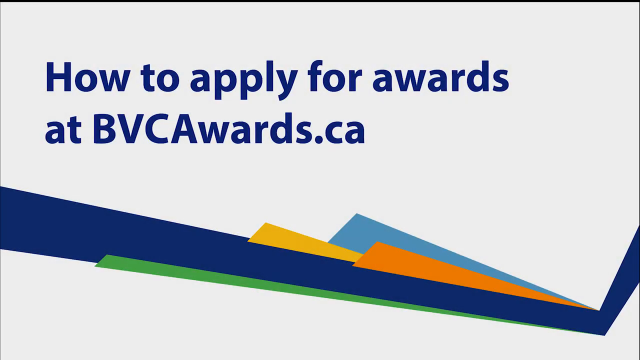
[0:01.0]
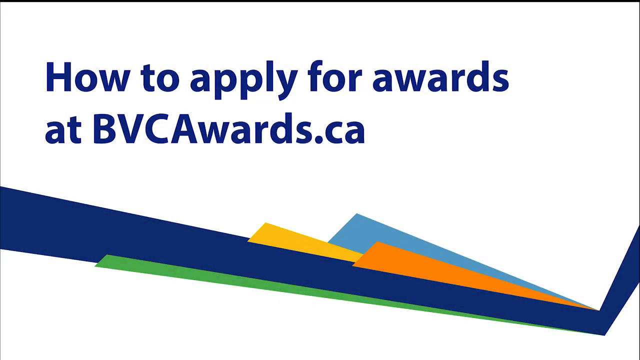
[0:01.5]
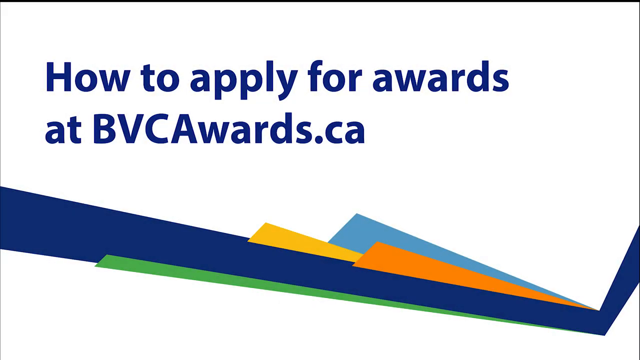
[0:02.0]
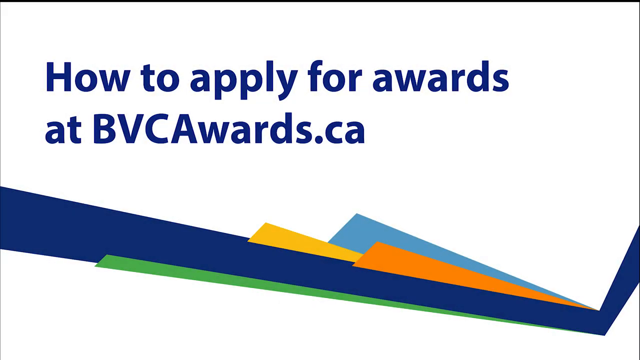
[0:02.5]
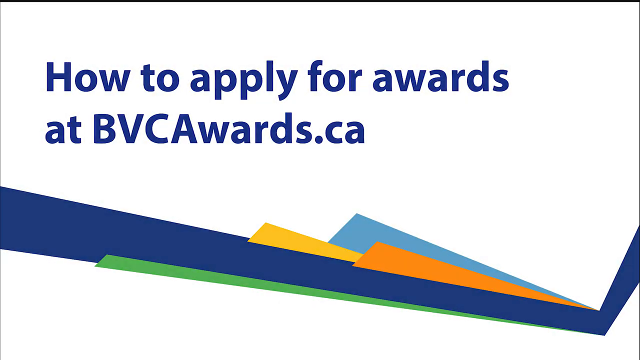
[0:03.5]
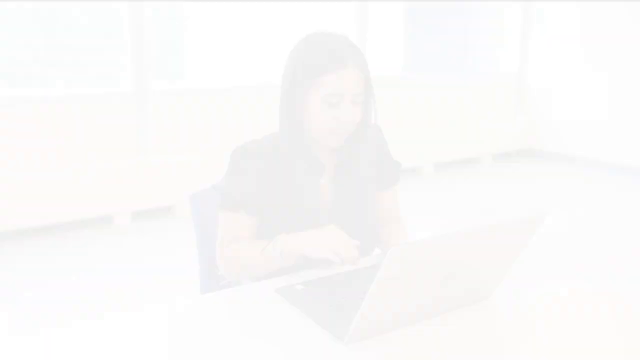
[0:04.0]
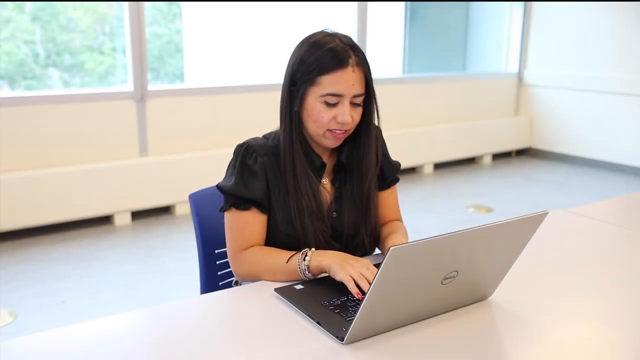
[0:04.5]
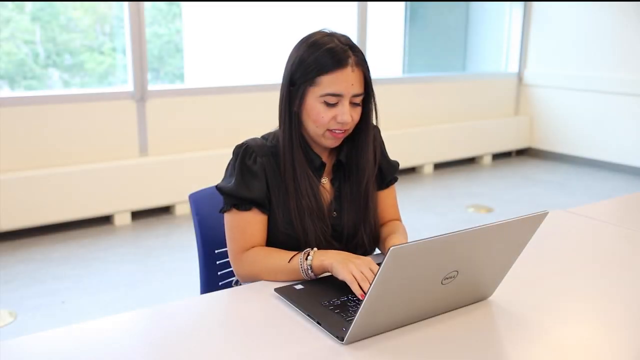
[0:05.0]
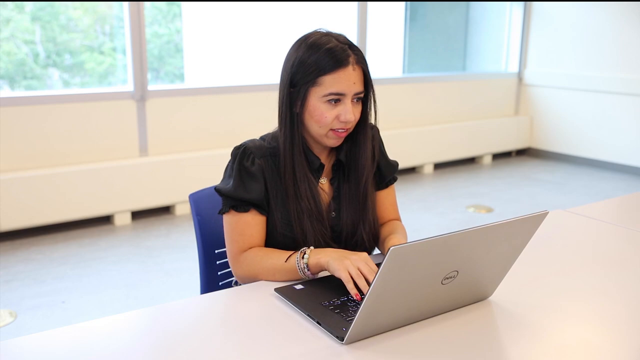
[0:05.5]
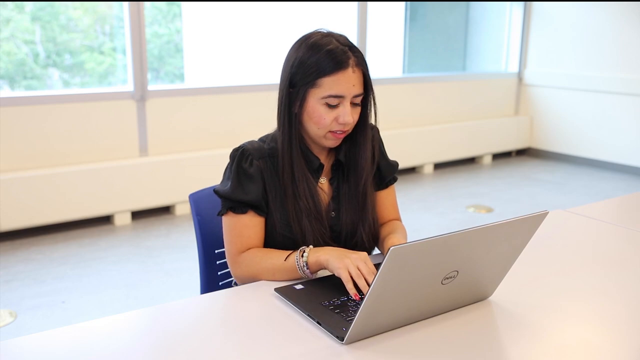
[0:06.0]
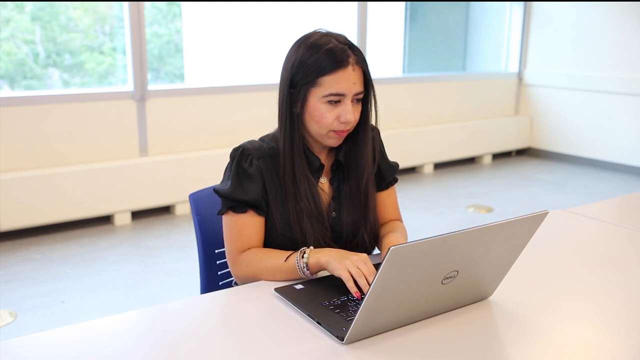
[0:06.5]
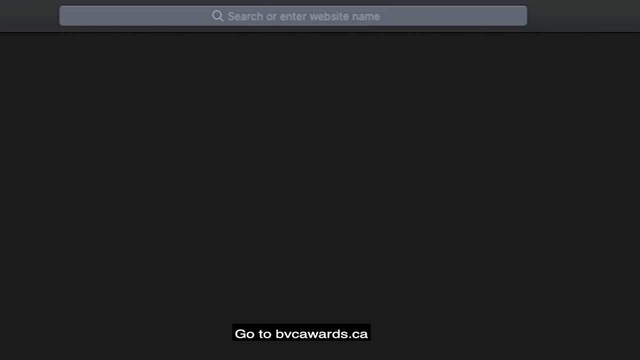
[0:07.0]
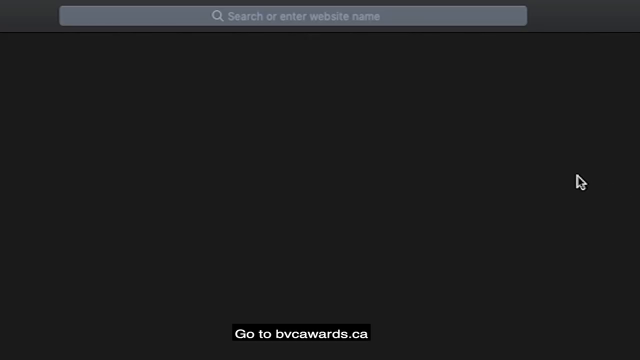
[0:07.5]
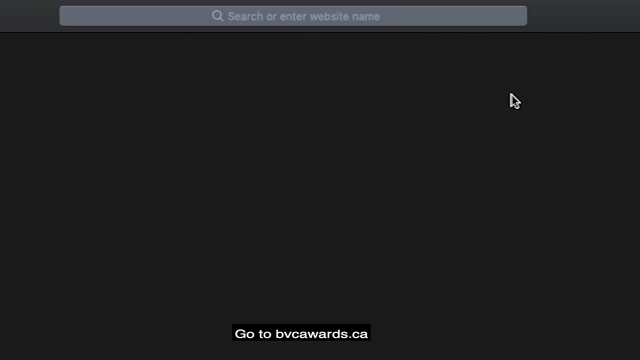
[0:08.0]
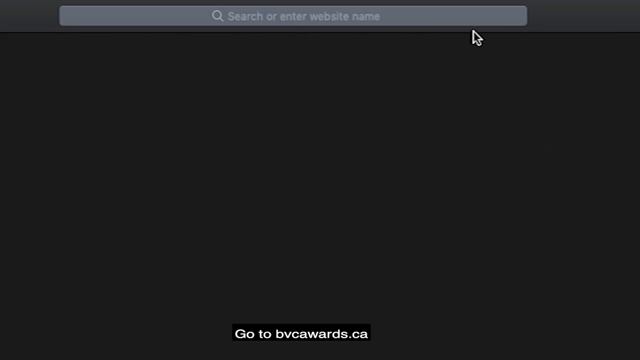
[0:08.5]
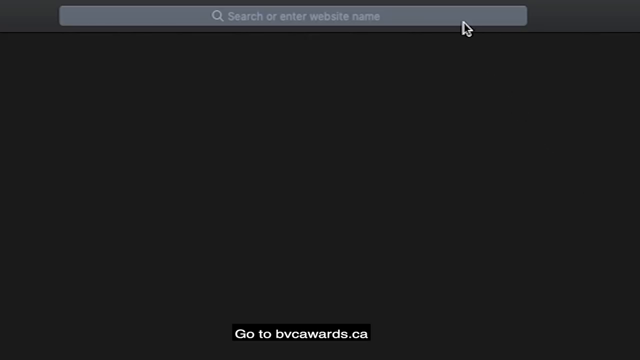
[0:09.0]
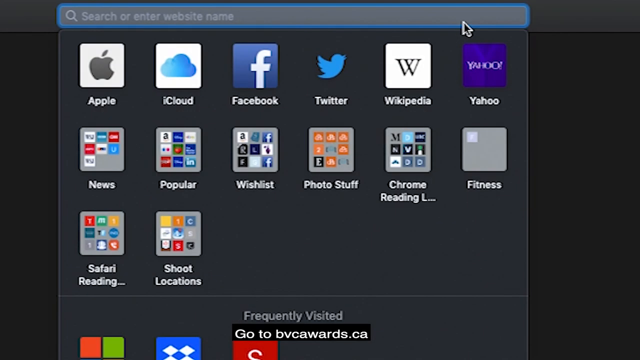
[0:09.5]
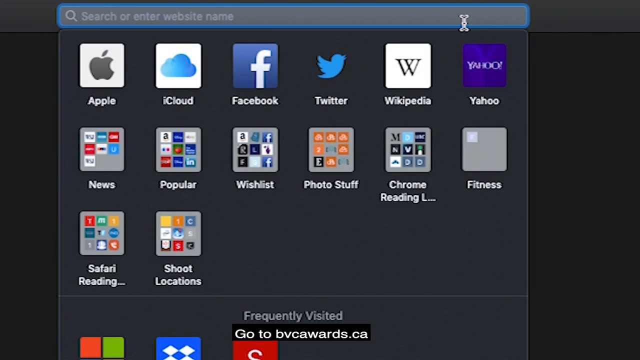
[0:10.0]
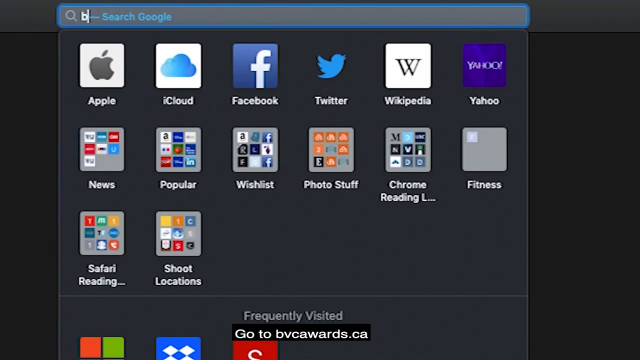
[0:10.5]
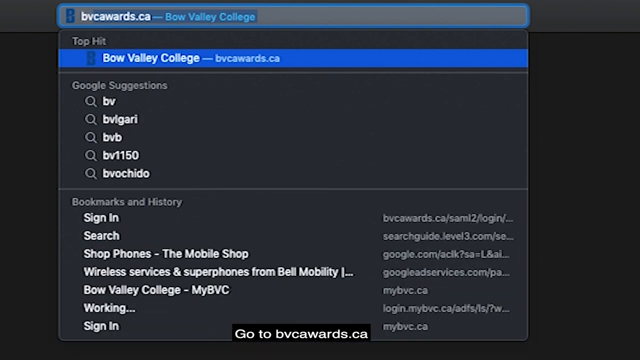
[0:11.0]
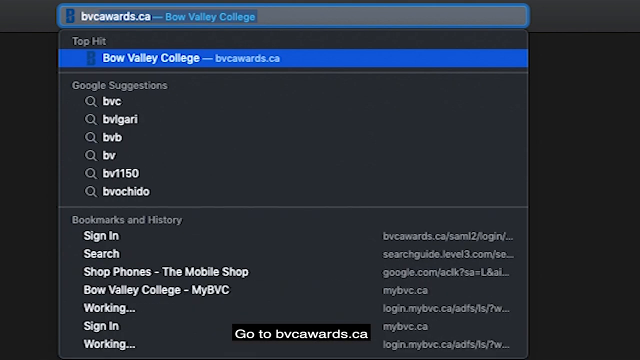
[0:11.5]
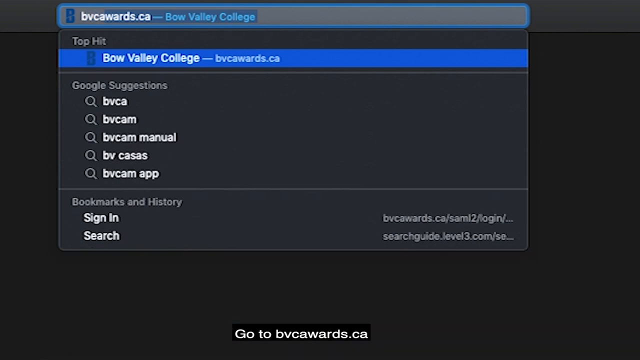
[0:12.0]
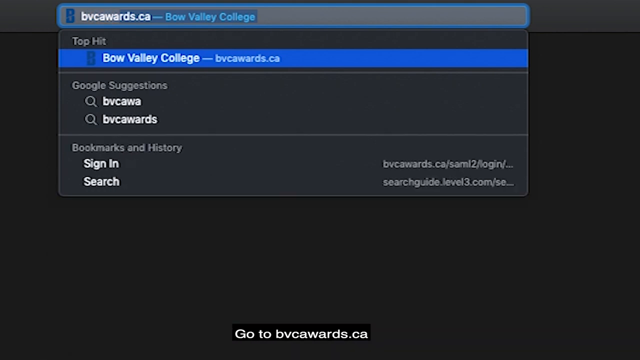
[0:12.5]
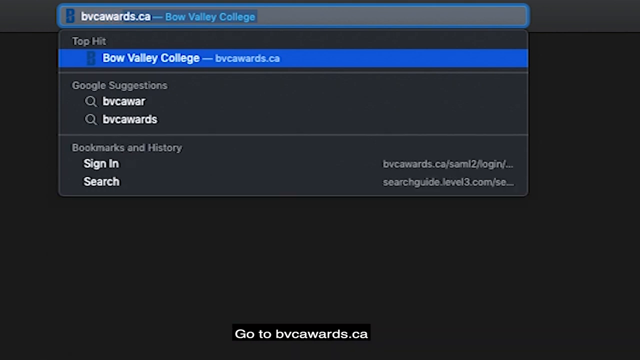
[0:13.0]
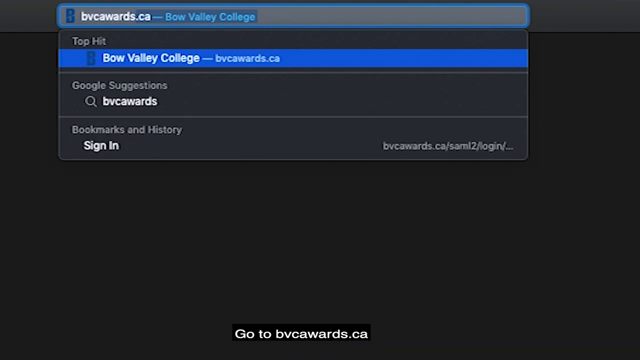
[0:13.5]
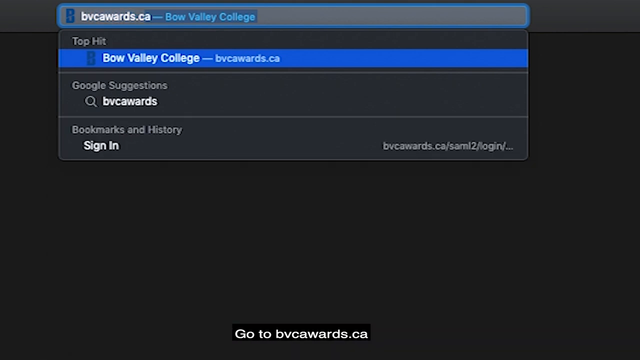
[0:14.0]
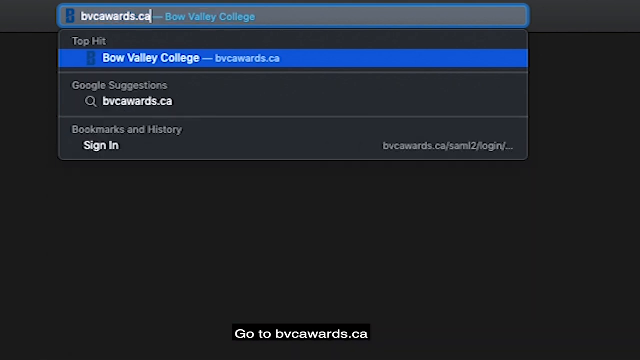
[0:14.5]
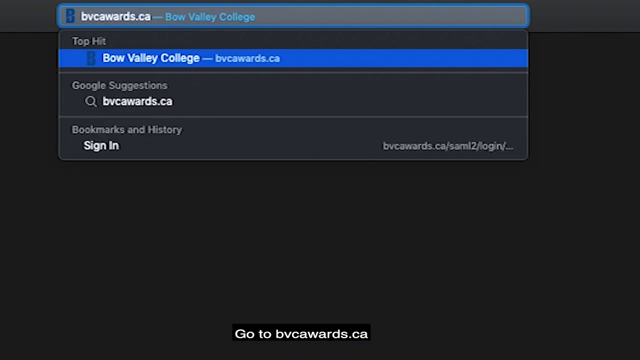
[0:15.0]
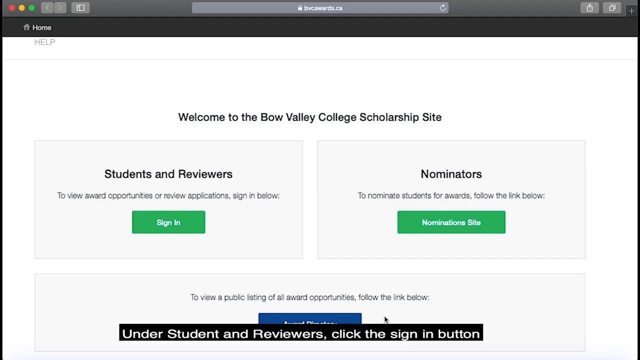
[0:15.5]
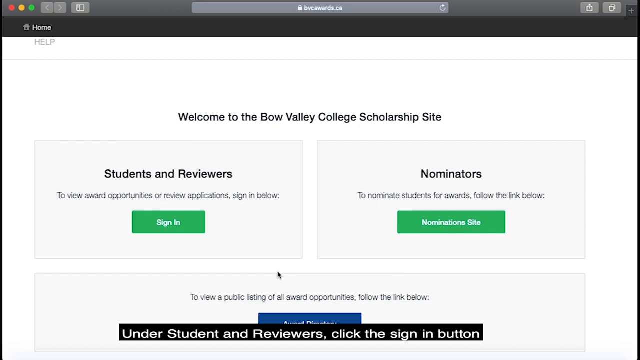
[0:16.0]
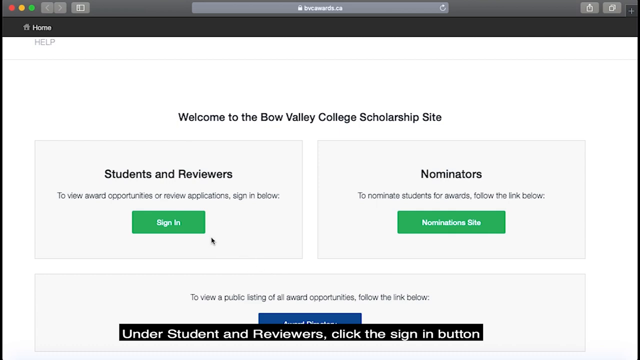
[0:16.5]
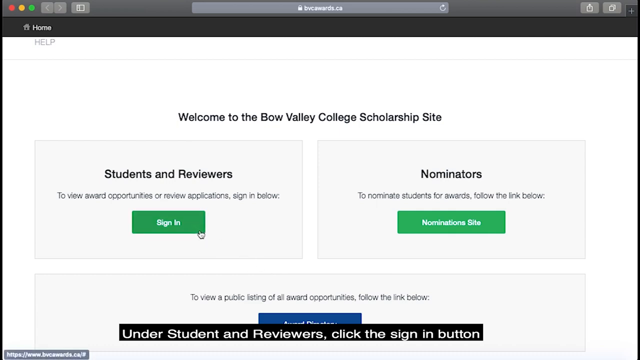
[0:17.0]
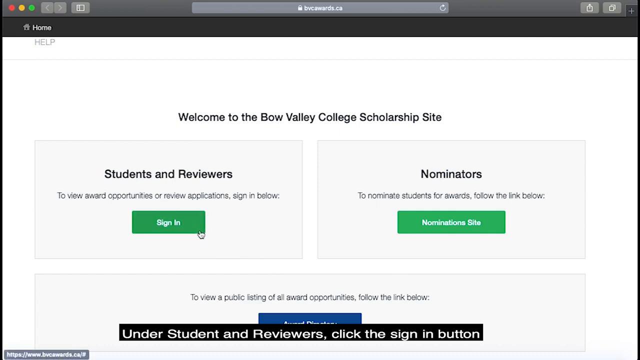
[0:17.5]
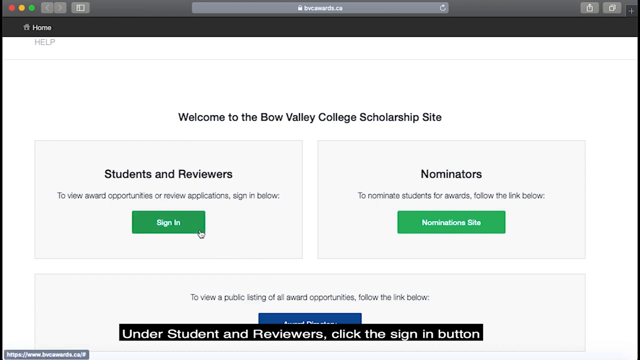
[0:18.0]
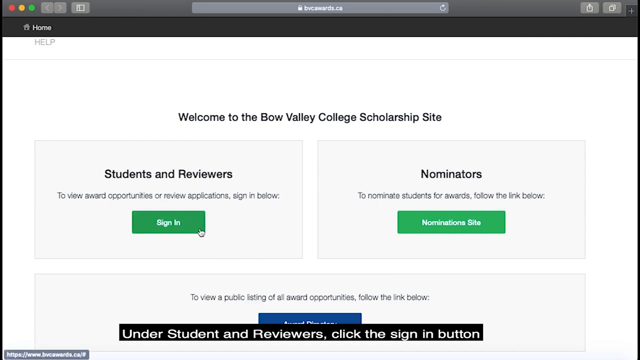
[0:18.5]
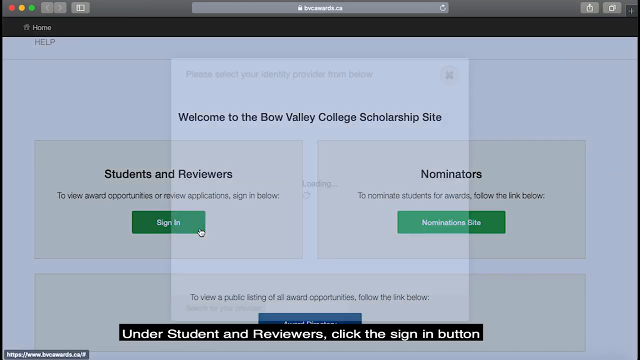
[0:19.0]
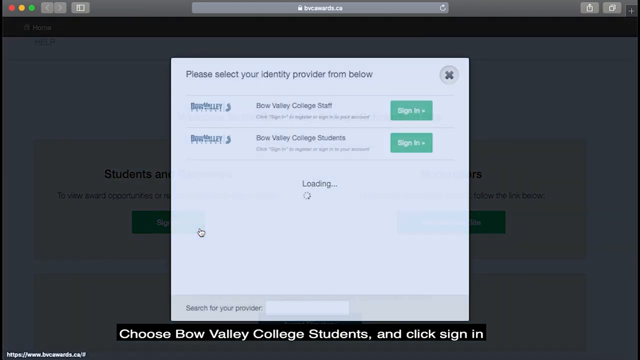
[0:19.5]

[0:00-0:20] The video opens on a white background with the words "how to apply for awards at bbcawards.ca" in blue writing in the upper left section. Below them, streaks of colour in different shades of green, blue and yellow run from the left-hand side to the right-hand corner. A lady is then shown at a desk, facing the camera, toward the bottom right-hand corner of the screen. Behind her are three large panelled windows with a plastic bottom section. She wears a black top with frilly sleeves, has long black hair, and is sat on a blue chair with a silver laptop in front of her, typing. The screen changes to a computer screen that looks like what she would see on her own screen. Icons in the top left-hand corner read "apple iCloud facebook twitter wikipedia and yahoo"; under those are "news popular wishlist photo stuff chrome reading fitness", and under that it says "safari reading and shoot locations". The screen then changes to show a blue panel running across the very top from the left to the right corner, with white text inside reading "Bow Valley College"; underneath it, in the black section, it says "google suggestions".